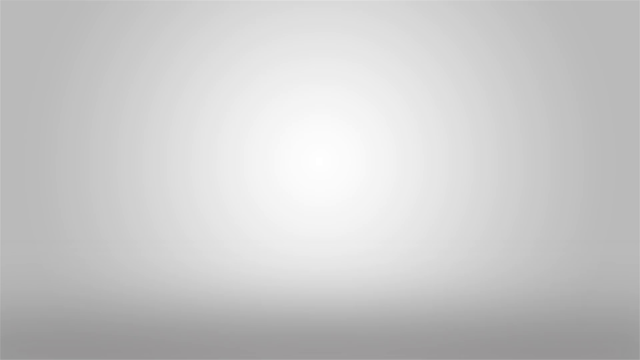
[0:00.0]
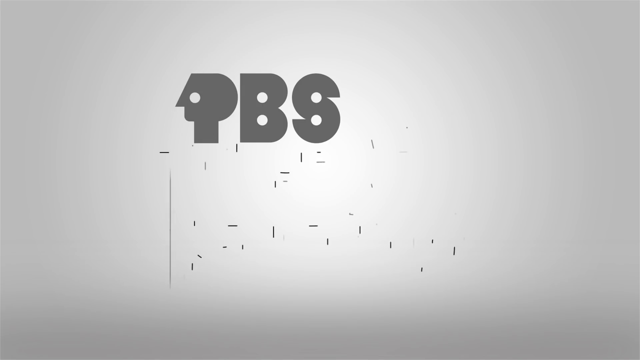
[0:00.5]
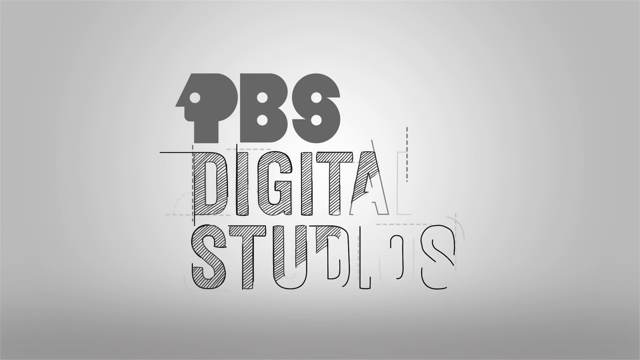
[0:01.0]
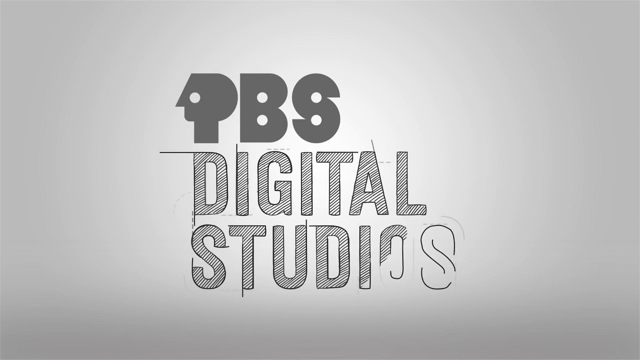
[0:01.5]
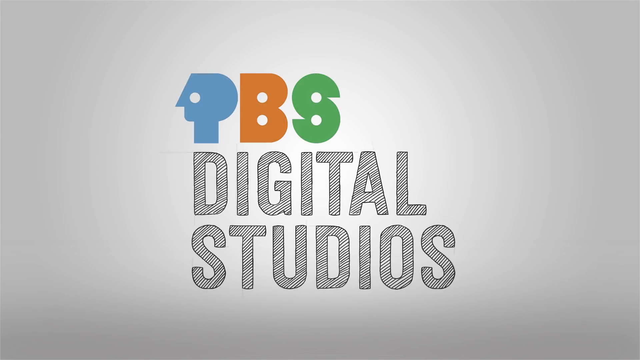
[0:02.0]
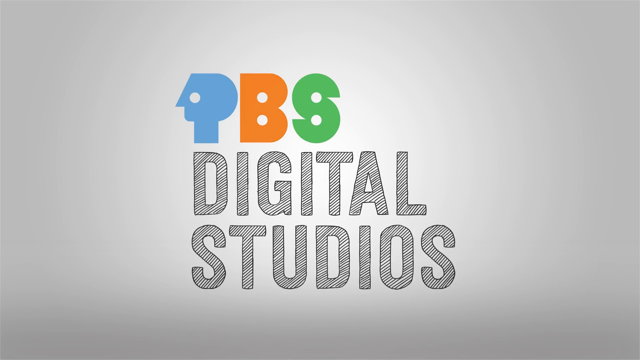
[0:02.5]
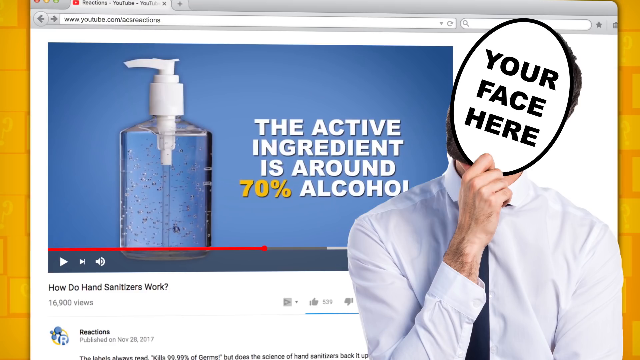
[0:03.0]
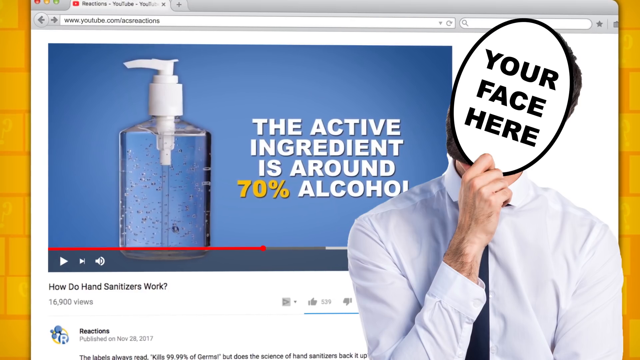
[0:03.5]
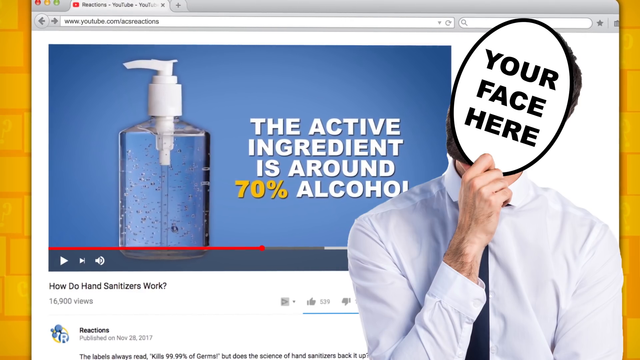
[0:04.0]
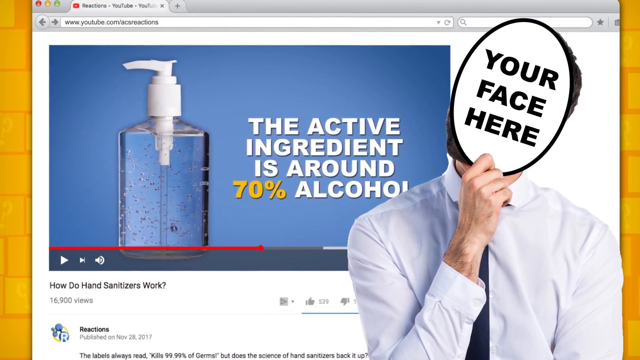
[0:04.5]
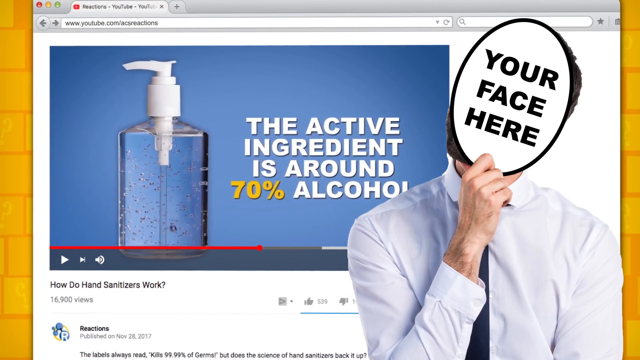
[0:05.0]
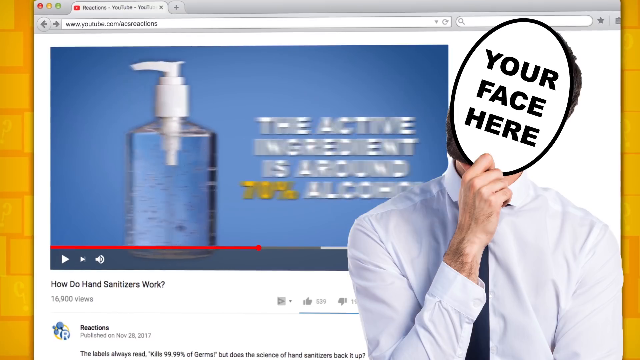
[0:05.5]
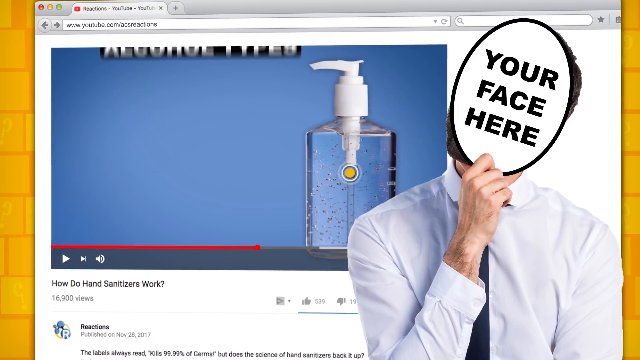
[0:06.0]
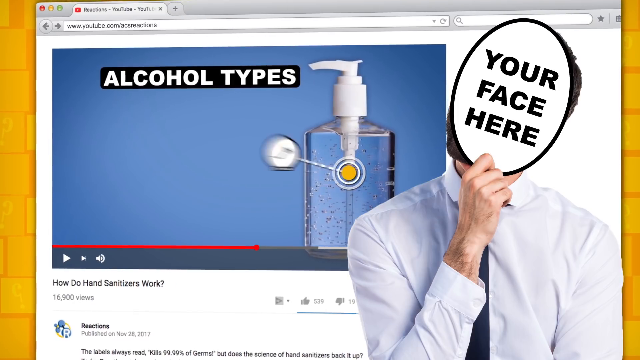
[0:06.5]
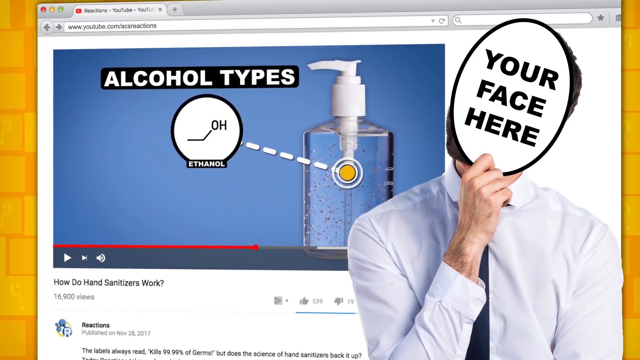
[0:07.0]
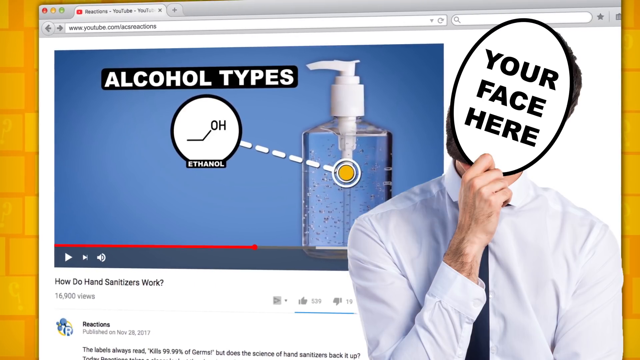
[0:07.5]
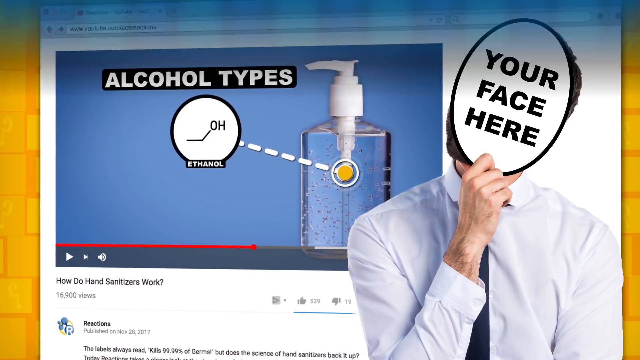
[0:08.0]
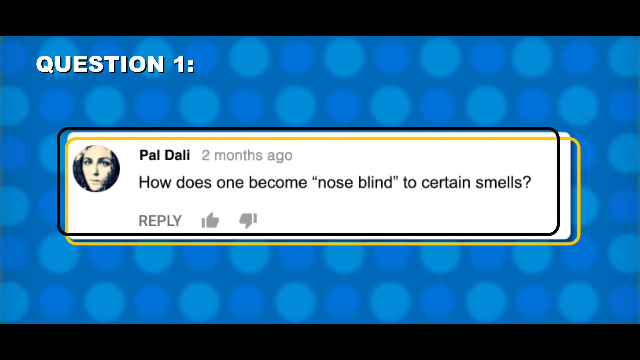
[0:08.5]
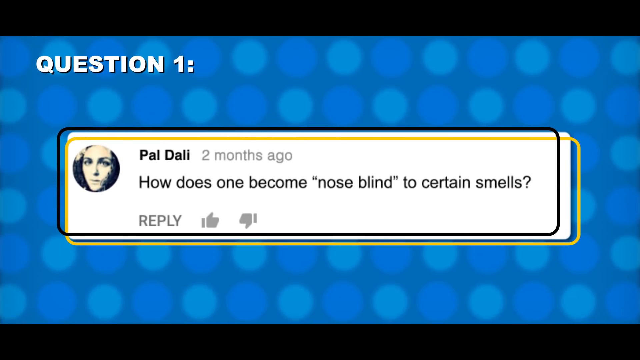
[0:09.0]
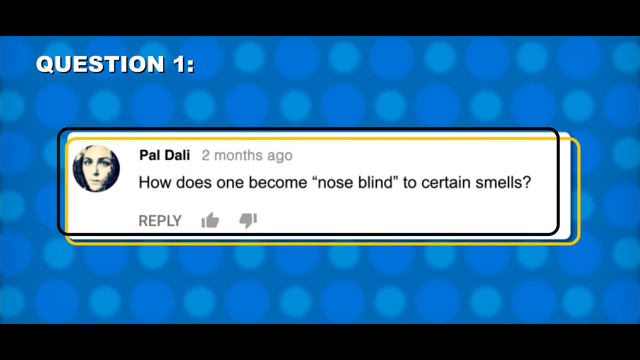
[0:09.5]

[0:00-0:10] Text appears on the screen: "PBS" is typed out backwards, with "Digital Studios" underneath it. "Digital Studios" is shaded in with diagonal lines, while "PBS" is colored: the P is light blue, the B is orange, and the S is green. The P looks like the side profile of a person. The screen switches to a picture of a man with an oval covering his face and the text "Your Face Here". A picture of a bottle of what appears to be sanitizer is shown inside a YouTube video screen, with text next to it saying the active ingredient is around 70% alcohol. The sanitizer bottle scoots over, and the text "alcohol types" appears at the top with a circle and the word "ethanol" beneath it. Then a question pops up on the screen.